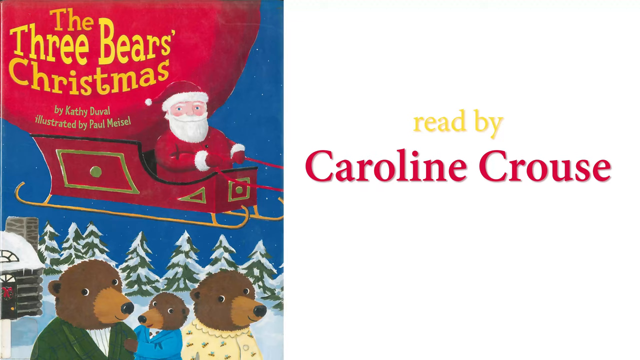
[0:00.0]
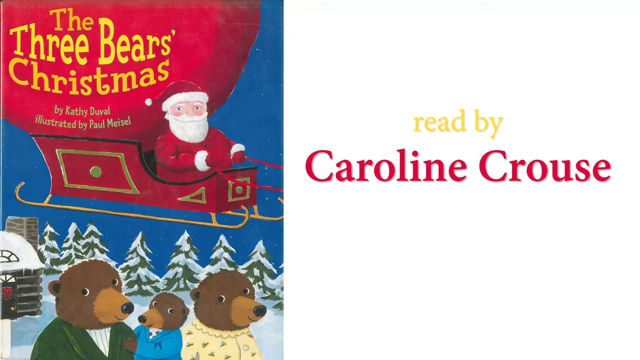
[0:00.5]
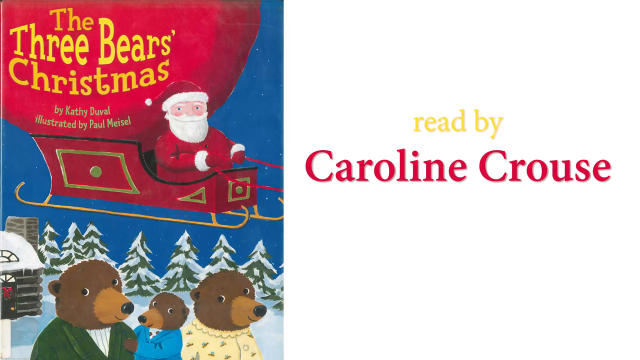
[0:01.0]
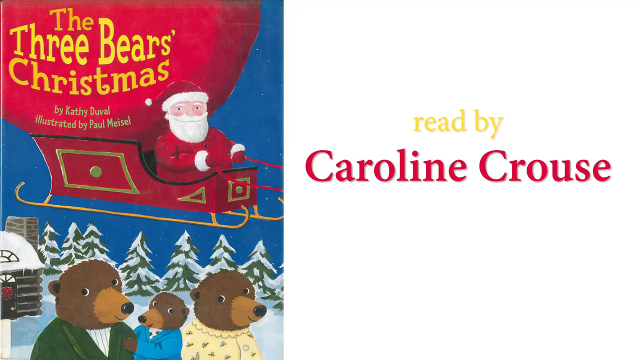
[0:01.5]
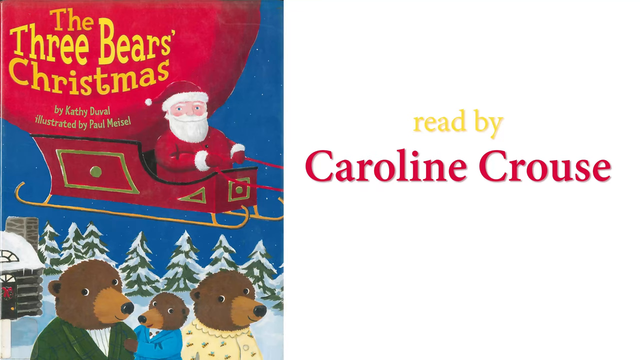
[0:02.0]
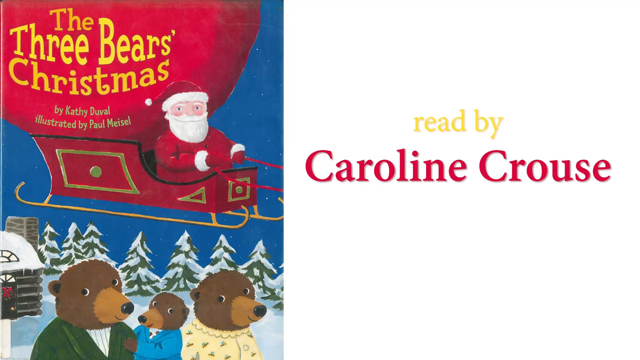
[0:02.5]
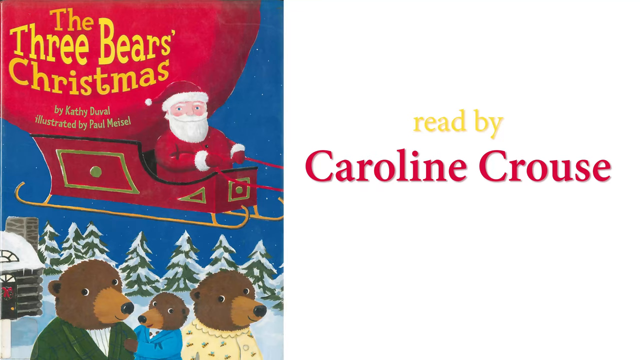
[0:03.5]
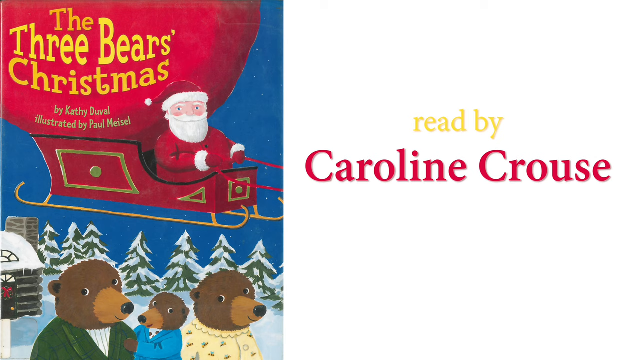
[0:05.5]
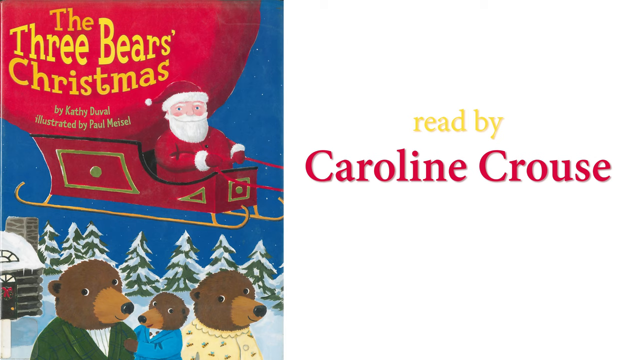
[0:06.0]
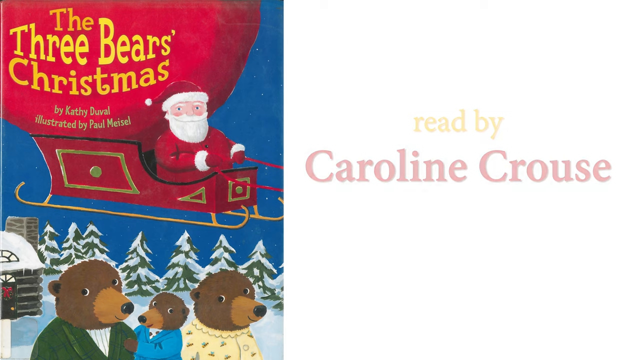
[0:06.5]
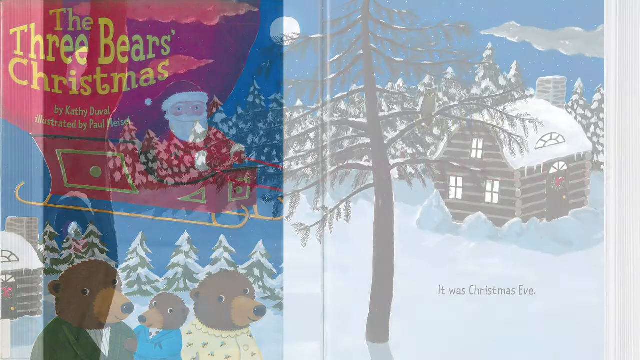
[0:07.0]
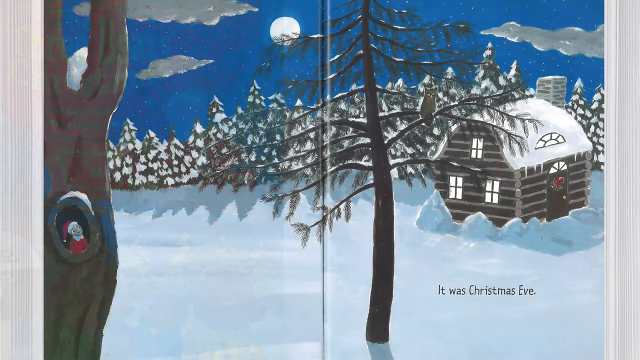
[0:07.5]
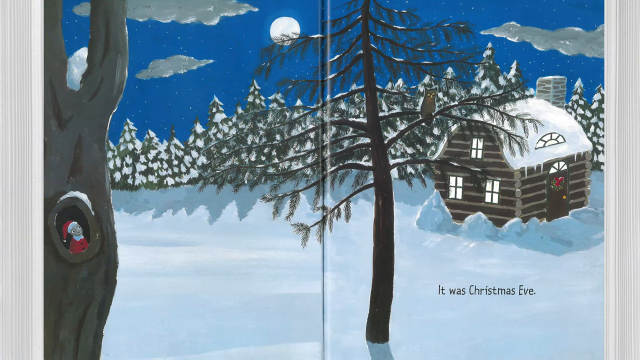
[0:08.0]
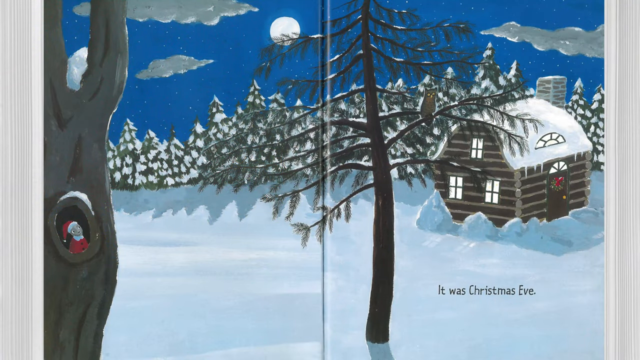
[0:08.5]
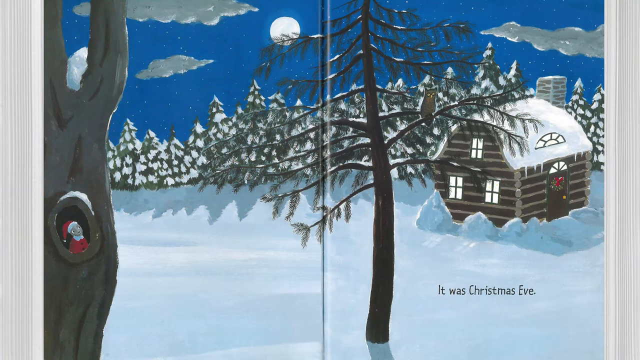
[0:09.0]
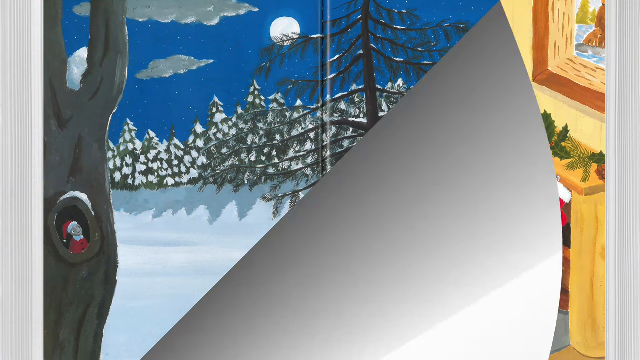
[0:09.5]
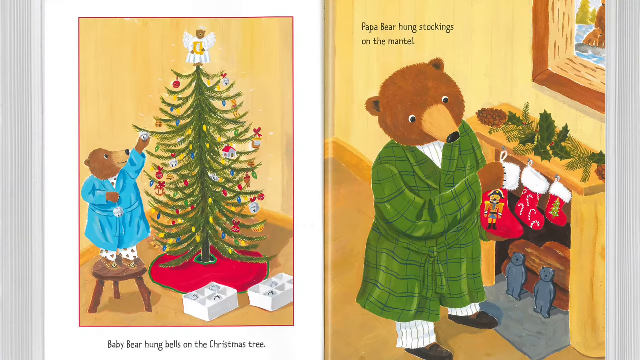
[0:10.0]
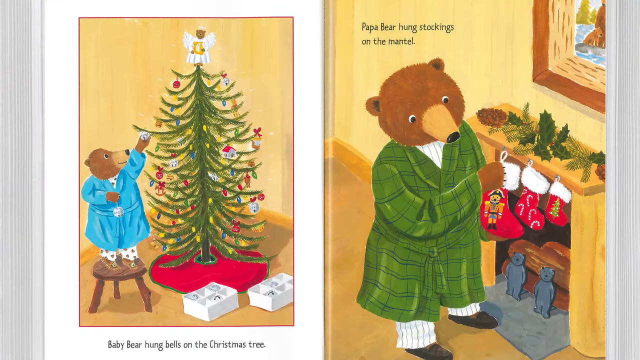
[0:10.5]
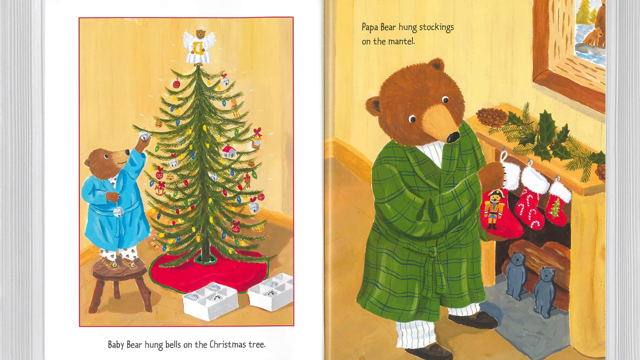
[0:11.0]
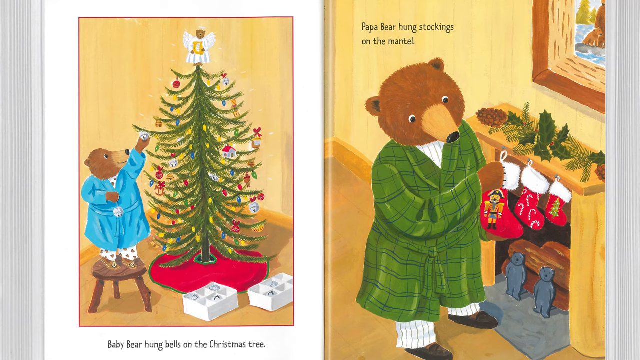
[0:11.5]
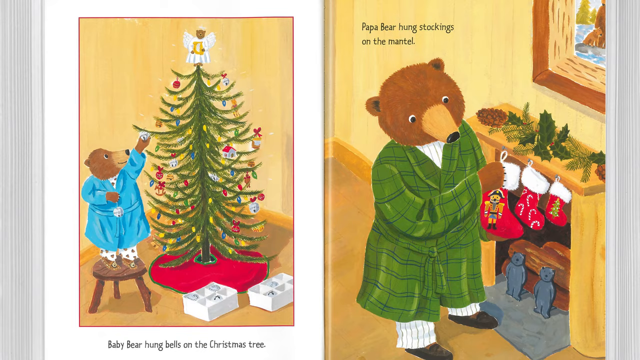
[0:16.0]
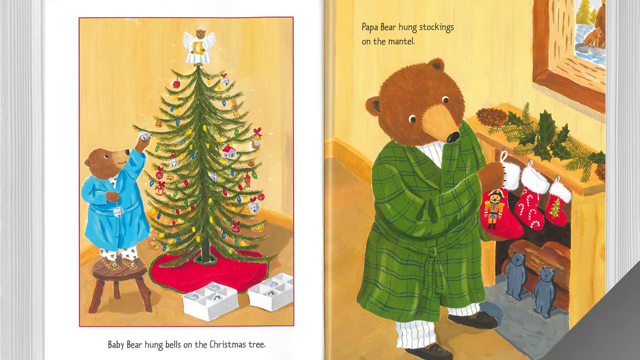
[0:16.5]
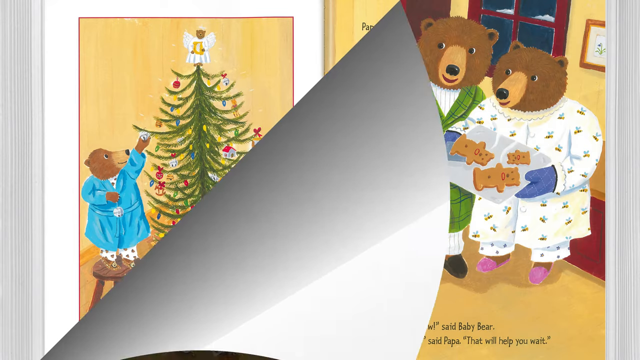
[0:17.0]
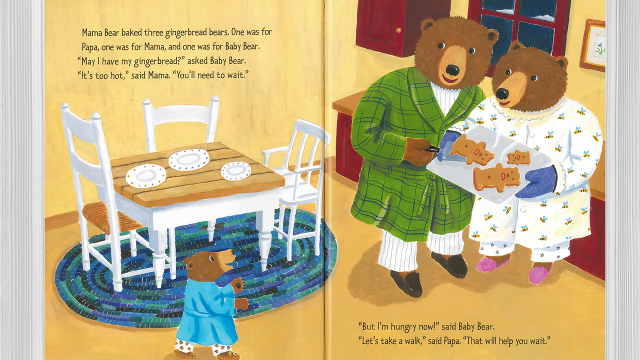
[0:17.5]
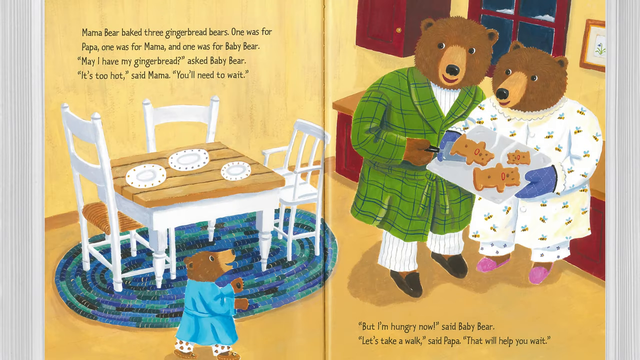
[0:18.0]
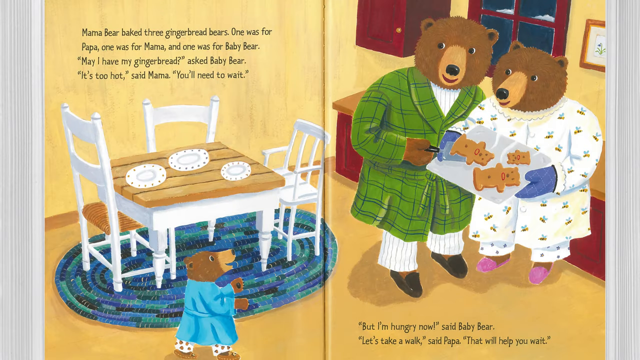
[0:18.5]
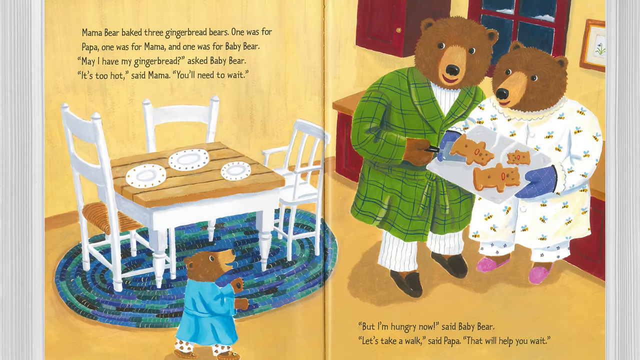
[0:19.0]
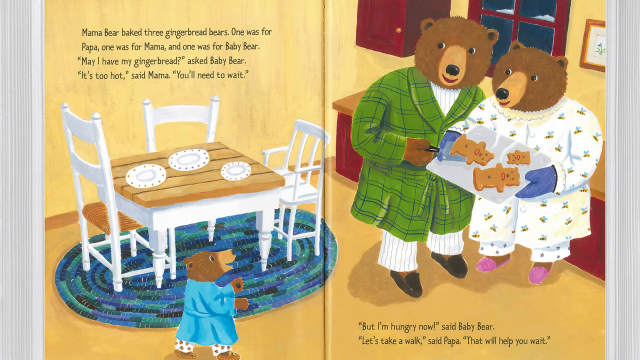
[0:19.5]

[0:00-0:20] The book is titled The Three Bears Christmas by Katie Duval, illustrated by Paul Meisel, and it is read by Caroline Crouse. The cover picture shows Santa Claus riding his sleigh with a big red bag full of gifts behind him. Three bears are at the bottom: the mommy bear, the daddy bear and the baby bear. Many Christmas trees and a small wooden lodge are in the background, and the ground is filled with snow. The first page shows Christmas Eve: many Christmas trees in the background, a bright moon and dark clouds. Lights come out from inside the wooden lodge. A large tree is on the left-hand side, and a little elf is hiding inside the tree. The next page shows the inside of the little lodge. Papa Bear has hung three red stockings on the mantel, and Baby Bear, wearing a bathrobe, has climbed up on a stool to hang bells on the Christmas tree. The next page reads: "mama bear bake three gingerbread bears, one for papa, one for mama, and one for baby bear. May I have my gingerbread? asked baby bear. It's too hot, said mama, you need to wait. Baby bear say, but I'm hungry now. Let's take a walk, said papa, that will help you wait." In the picture, Papa Bear stands next to Mama Bear in their kitchen. The kitchen wall and floor are yellow, while the cabinets are red. A wooden table has three chairs and three plates on it. Baby Bear walks in excitedly, wearing a blue bathrobe.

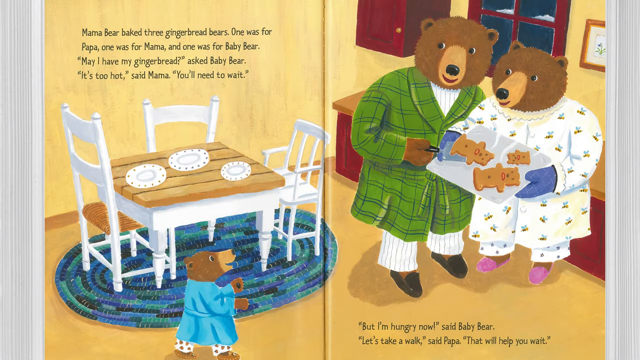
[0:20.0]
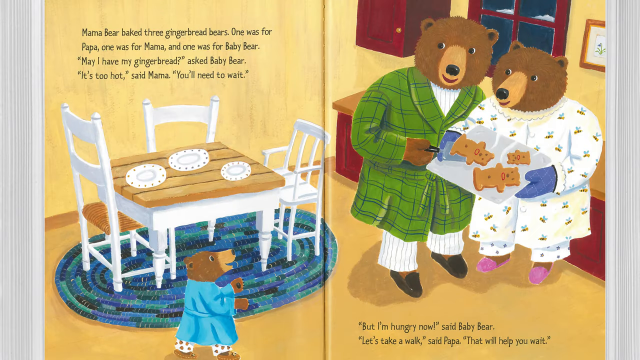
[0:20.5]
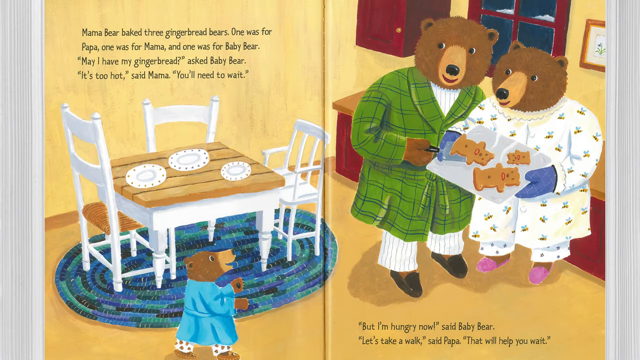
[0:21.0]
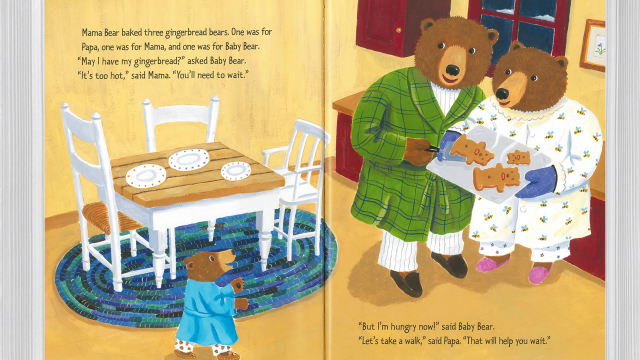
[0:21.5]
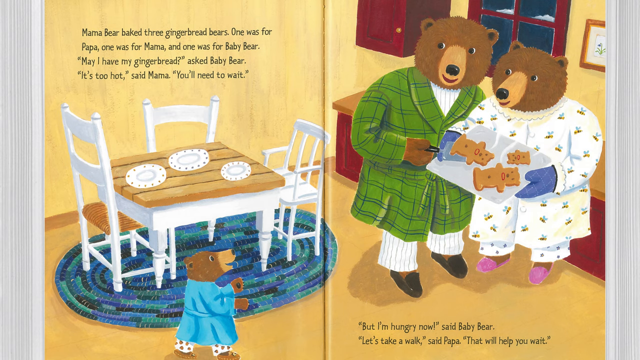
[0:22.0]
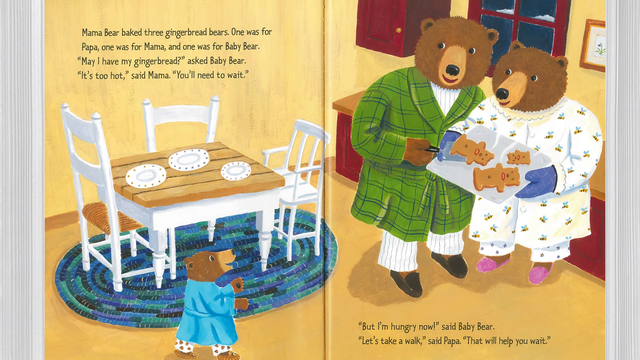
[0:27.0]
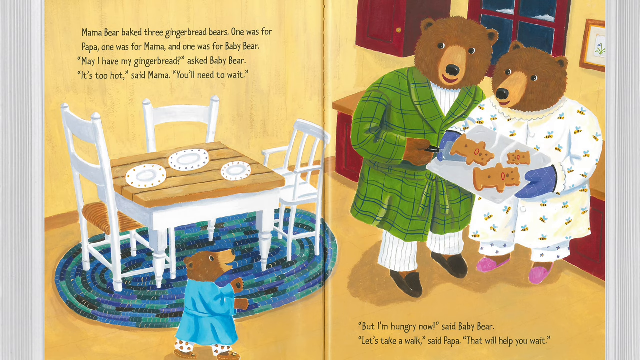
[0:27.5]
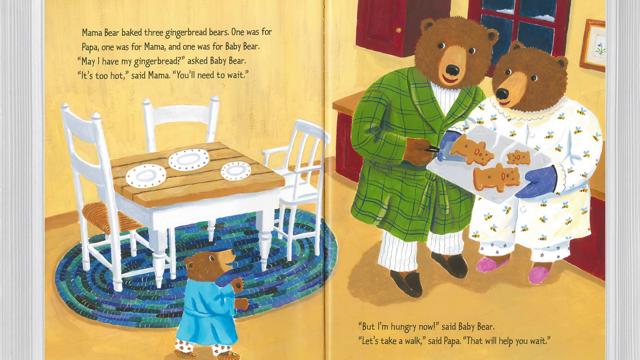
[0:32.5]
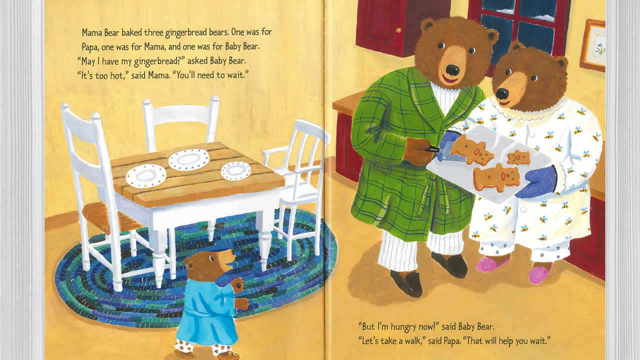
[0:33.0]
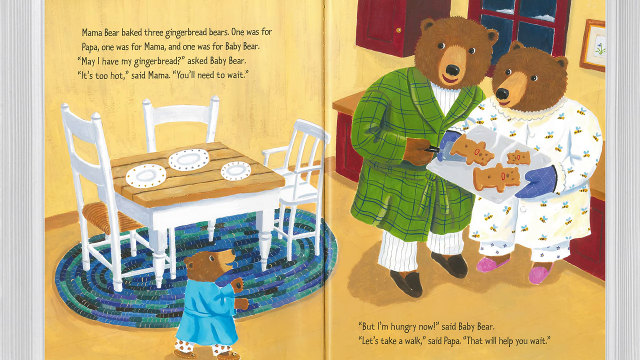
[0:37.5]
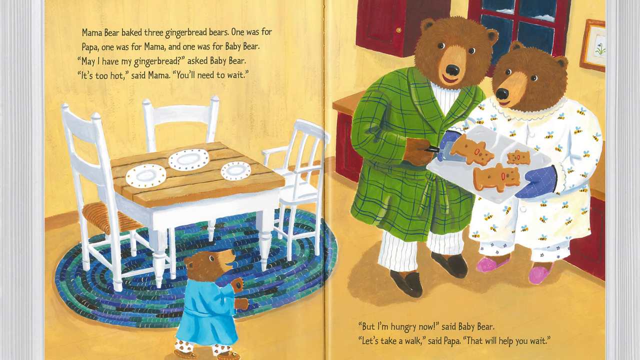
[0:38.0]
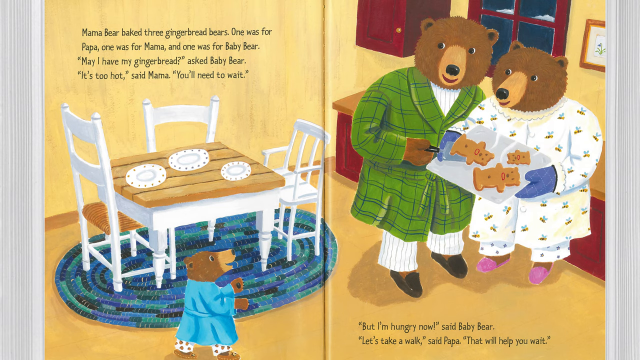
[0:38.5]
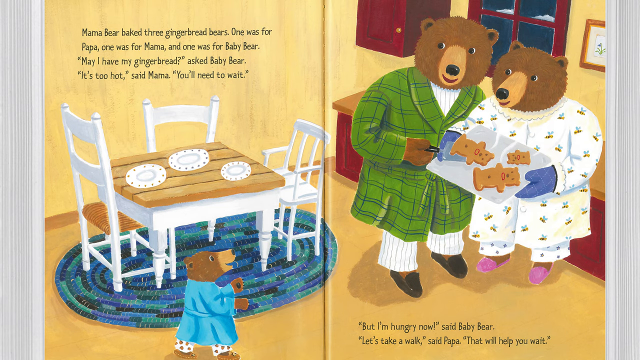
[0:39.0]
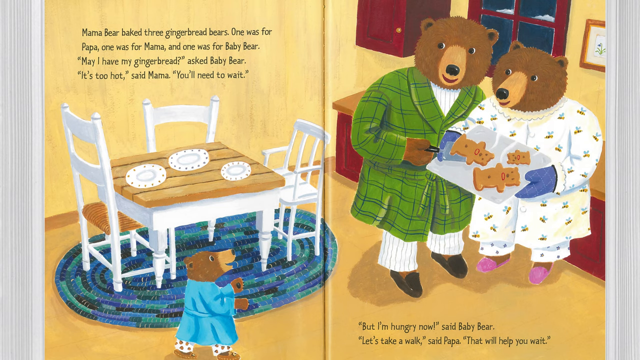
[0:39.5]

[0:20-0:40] A page reads: "mama bear bake three gingerbread bears, one for papa, one for mama, and one for baby bear. May I have my gingerbread? asked baby bear. It's too hot, said mama, you need to wait. Baby bear say, but I'm hungry now. Let's take a walk, said papa, that will help you wait." The picture shows Papa Bear standing next to Mama Bear in their kitchen. Mama Bear wears long white pajamas and holds a plate with three gingerbread bears. Papa Bear wears a green bathrobe over his white pajamas. The kitchen wall and floor are yellow, while the cabinets are red. There is a white wooden table with three chairs and three plates on it, and a blue rug under the table. Baby Bear walks in excitedly, wearing a blue bathrobe and asking for the gingerbread.